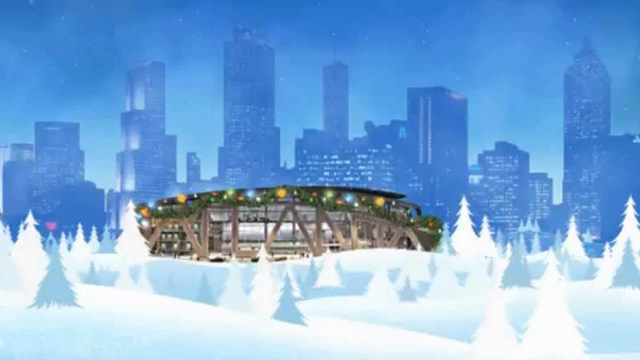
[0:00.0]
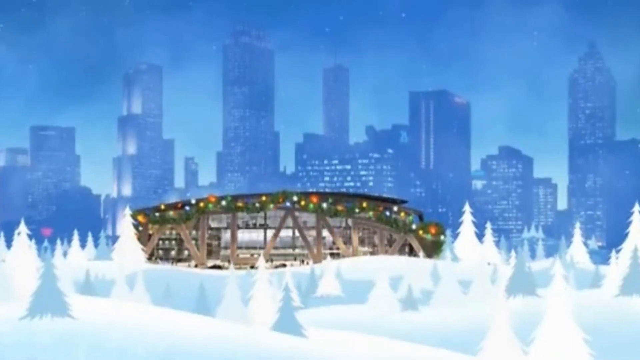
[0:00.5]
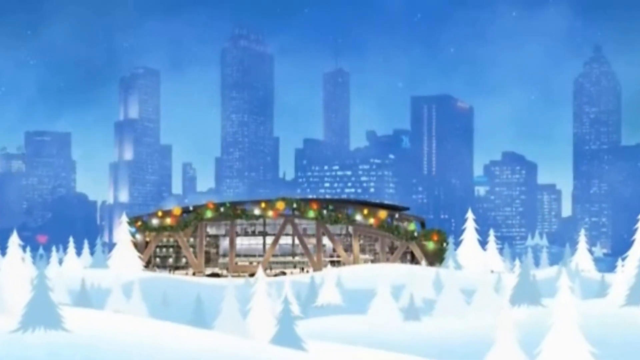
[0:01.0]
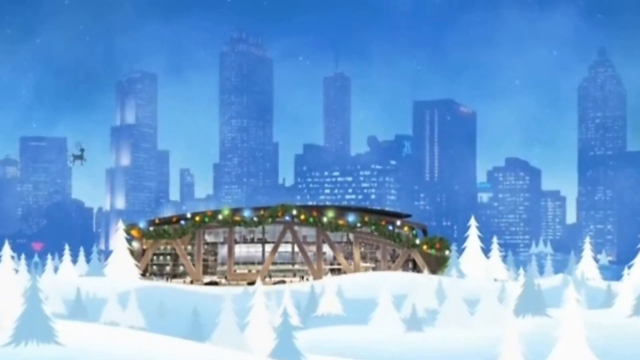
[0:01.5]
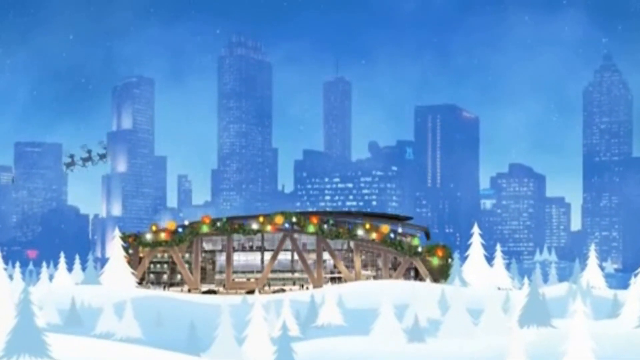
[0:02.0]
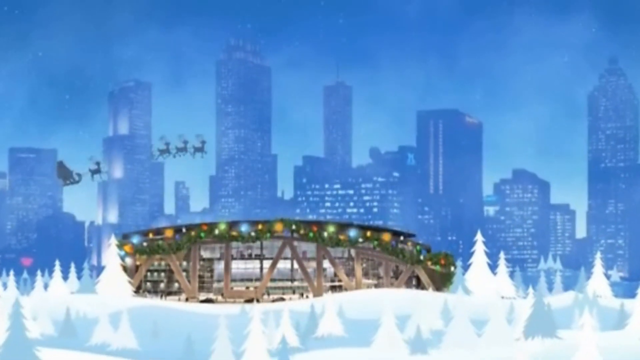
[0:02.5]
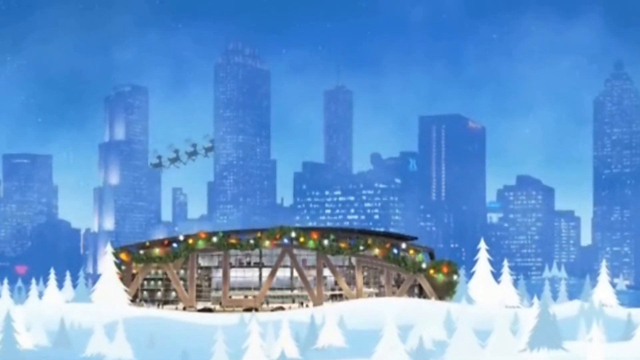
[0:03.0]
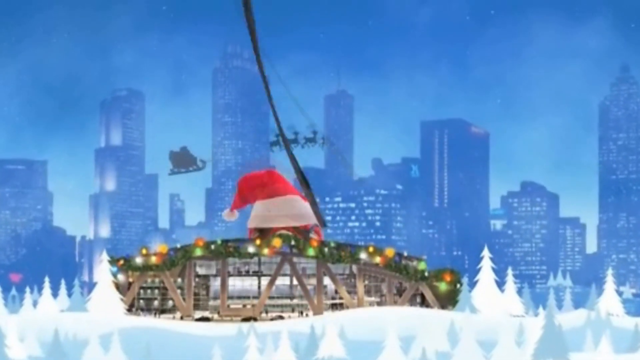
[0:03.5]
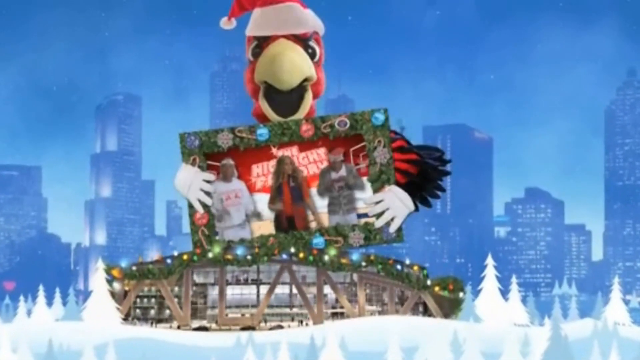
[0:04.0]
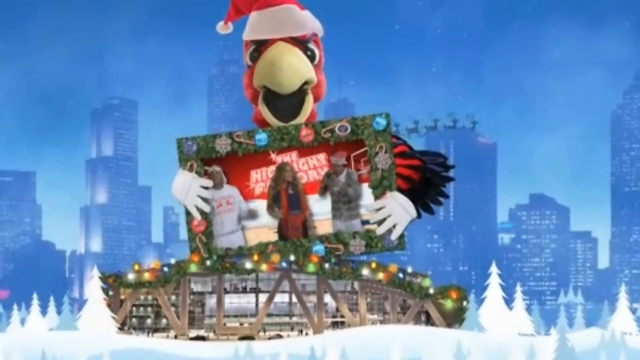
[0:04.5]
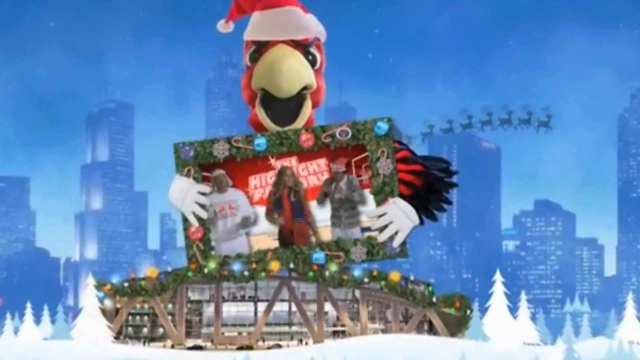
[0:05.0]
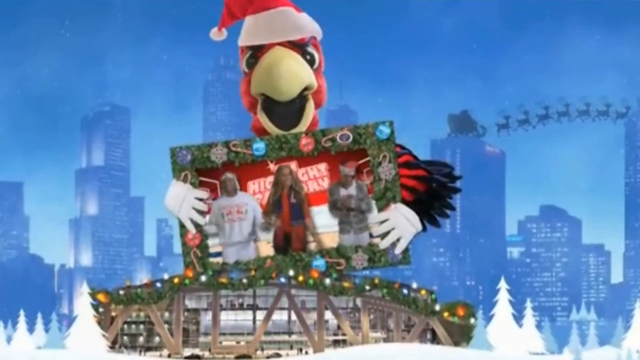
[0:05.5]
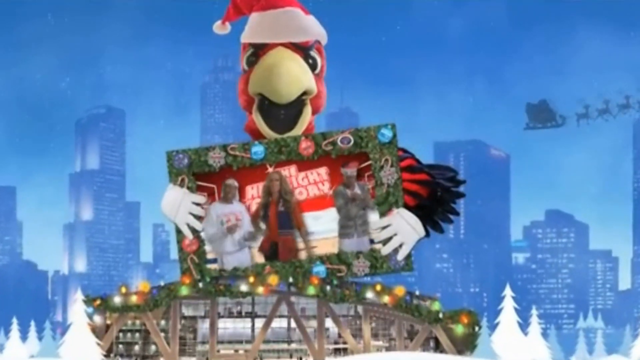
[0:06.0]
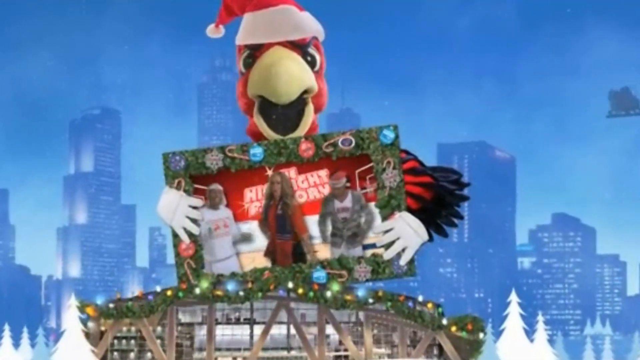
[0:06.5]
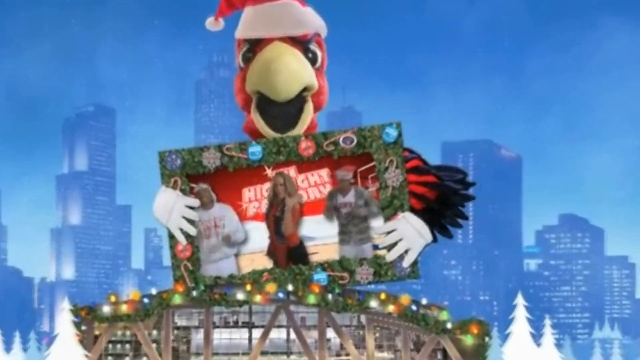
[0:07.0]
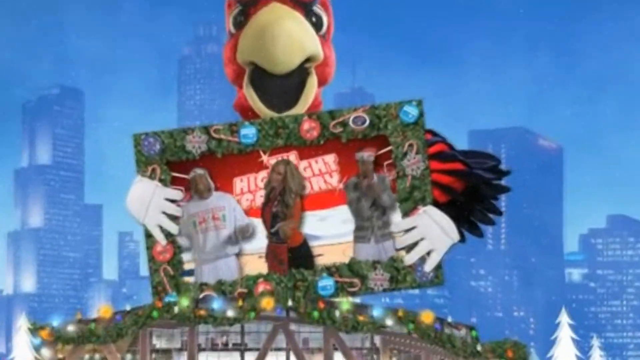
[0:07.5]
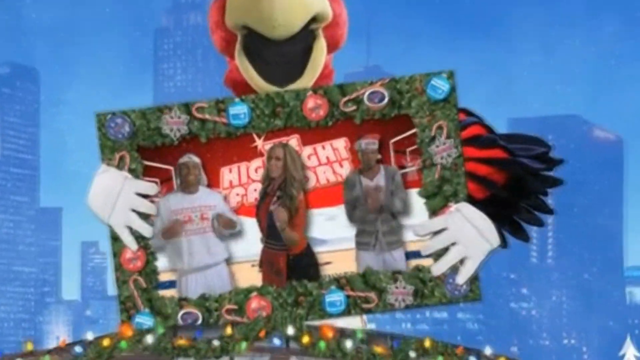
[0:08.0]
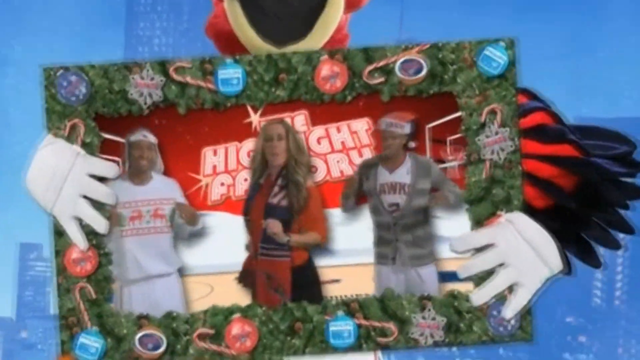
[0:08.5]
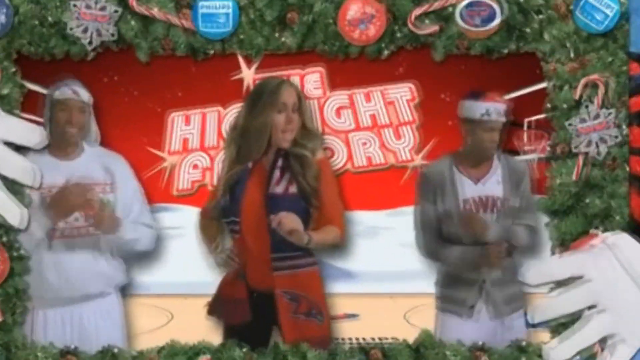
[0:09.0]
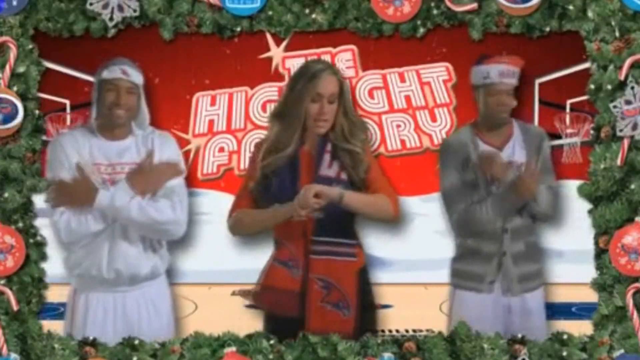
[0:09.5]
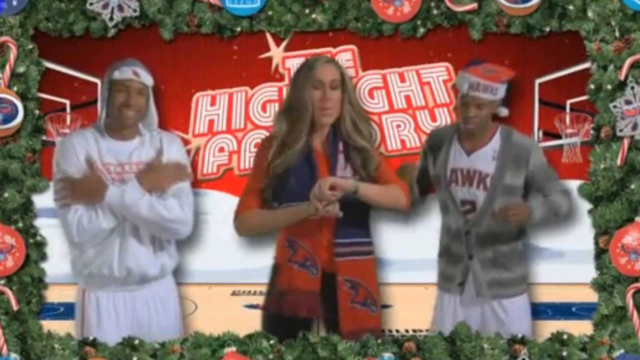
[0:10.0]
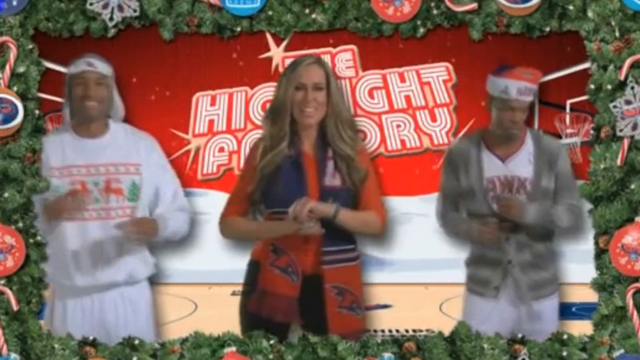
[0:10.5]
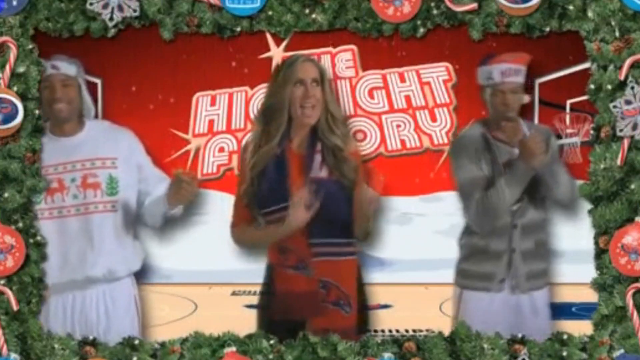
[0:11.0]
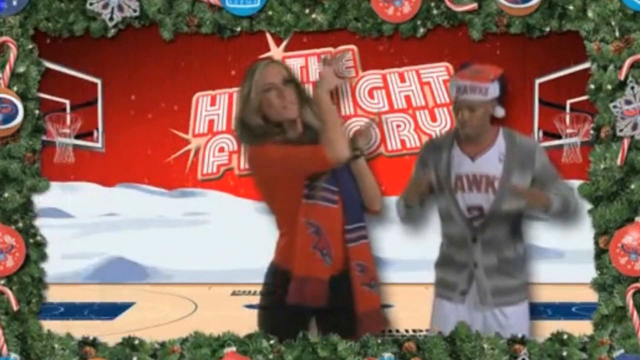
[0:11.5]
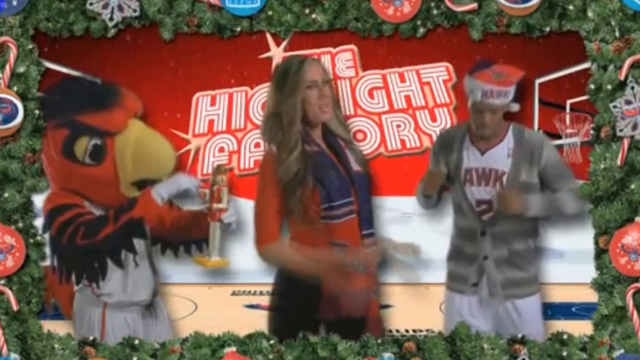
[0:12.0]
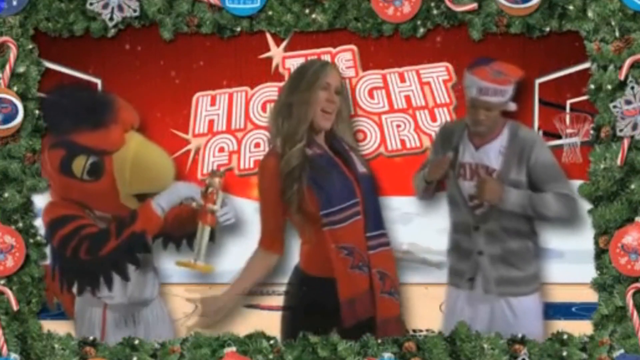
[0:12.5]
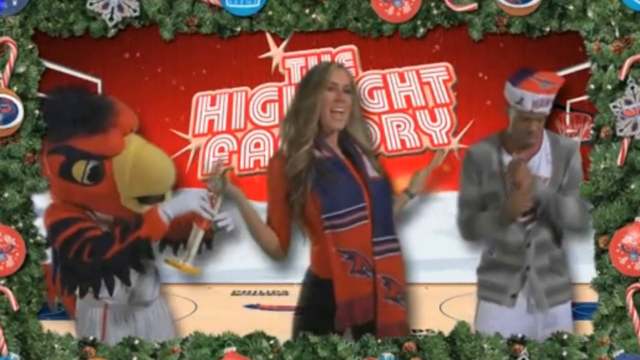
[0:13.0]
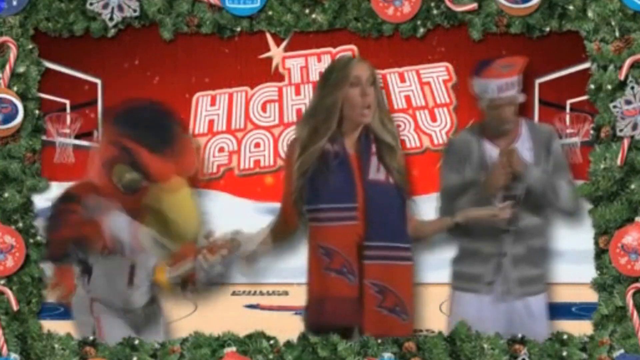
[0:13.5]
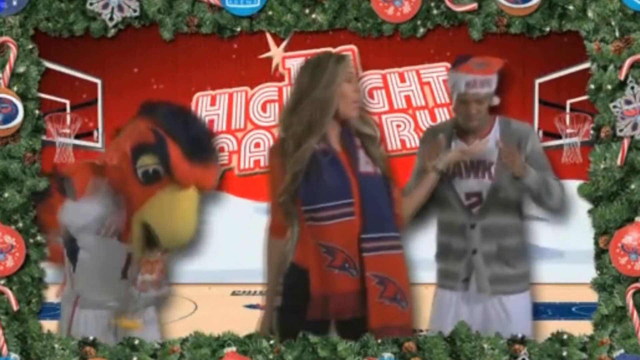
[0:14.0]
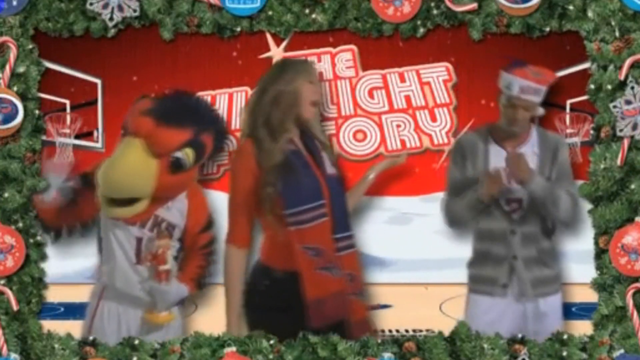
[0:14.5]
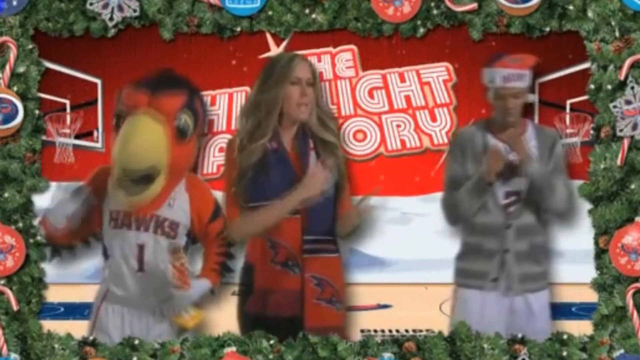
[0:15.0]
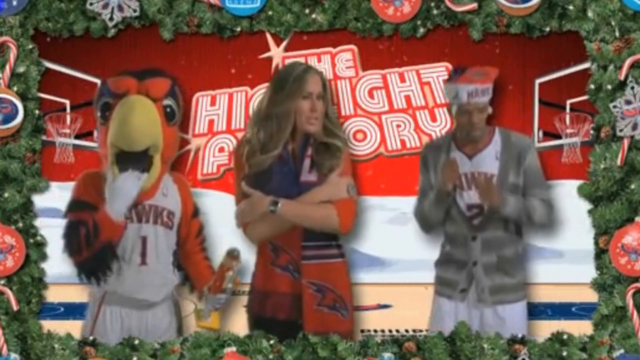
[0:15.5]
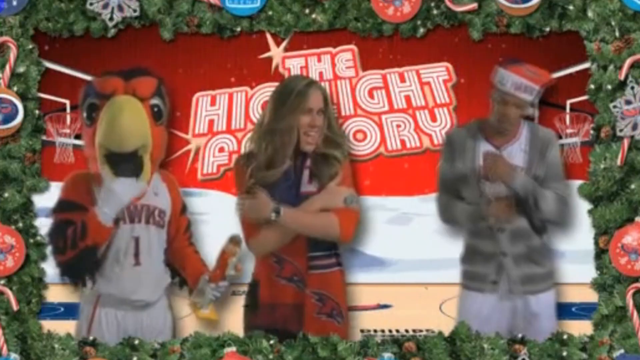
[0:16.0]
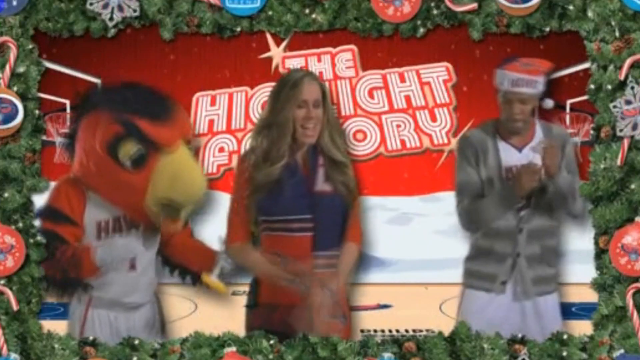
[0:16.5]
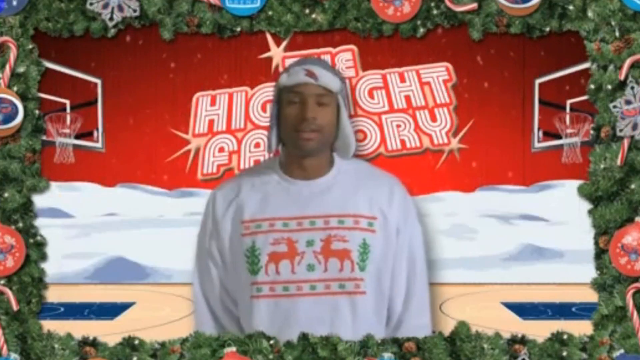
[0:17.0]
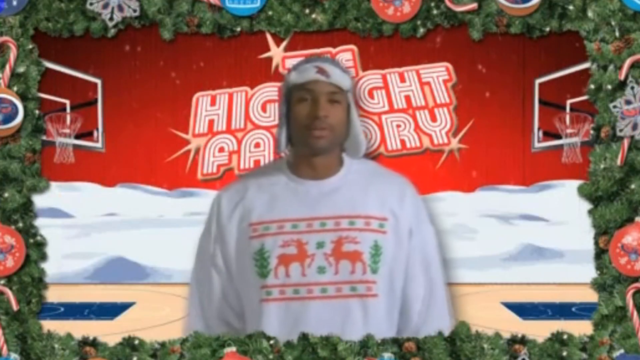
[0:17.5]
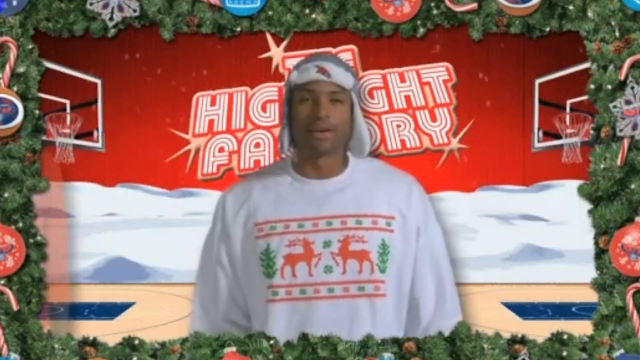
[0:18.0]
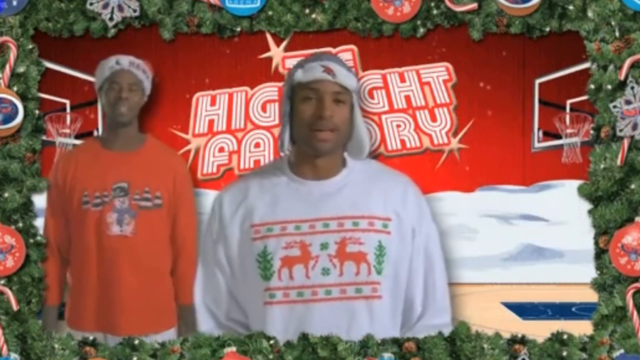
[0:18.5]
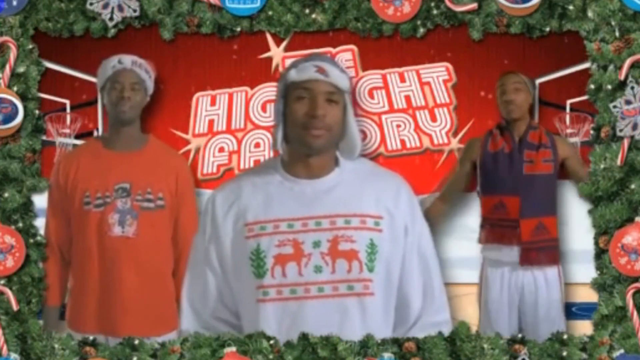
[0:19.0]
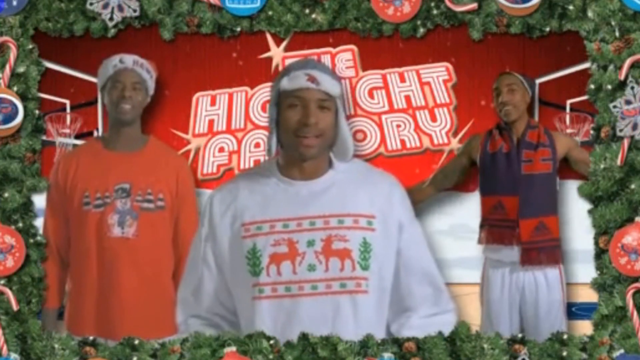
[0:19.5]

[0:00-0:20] An animation shows Christmas lights that look like they are on top of a stadium. Santa's sleigh goes across the sky in the background, from left to right over the city skyline. In the middle of the stadium, with the Christmas lights twinkling on it, a red bird pops up. The bird wears a Santa hat and a Hawks jersey, marking this as the Atlanta Hawks, and holds an image in front of him. In the image, three people sway back and forth singing, apparently a Christmas carol. The girl in the center kind of puts her two hands together and throws them forward, like she is throwing a basketball toward a hoop.